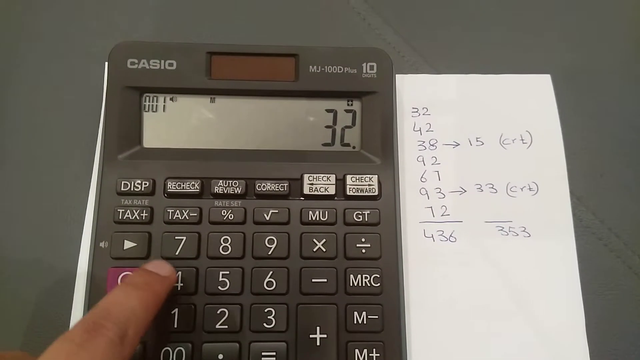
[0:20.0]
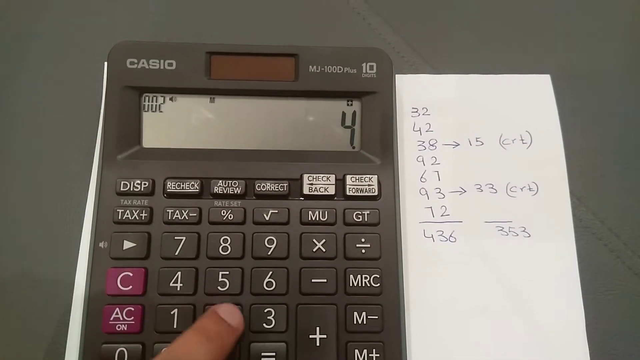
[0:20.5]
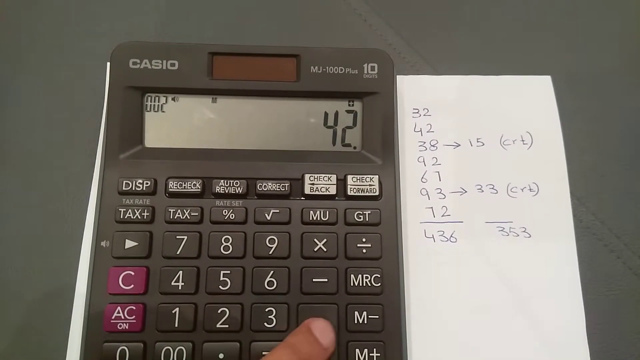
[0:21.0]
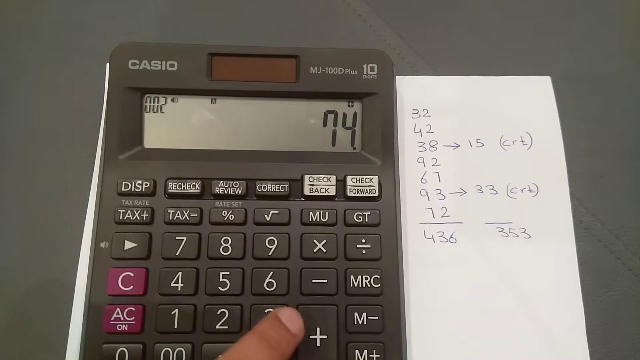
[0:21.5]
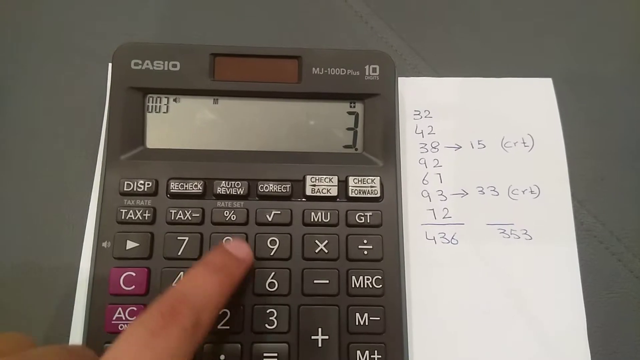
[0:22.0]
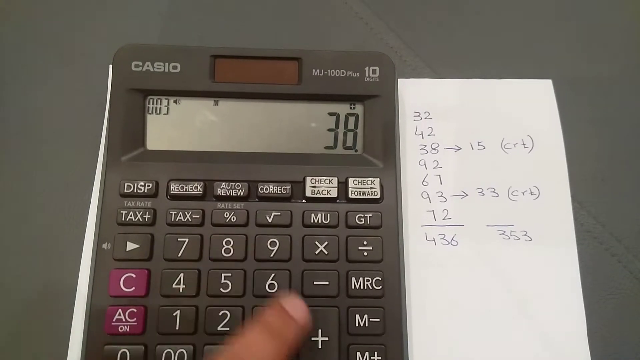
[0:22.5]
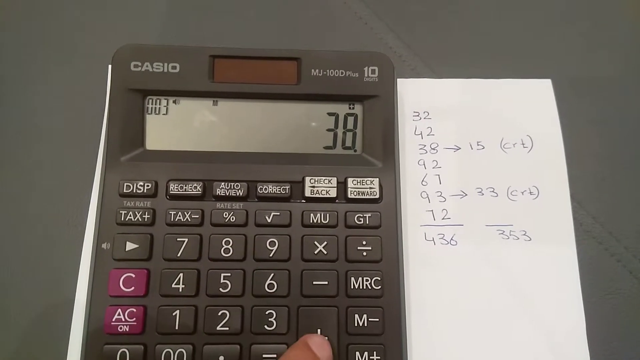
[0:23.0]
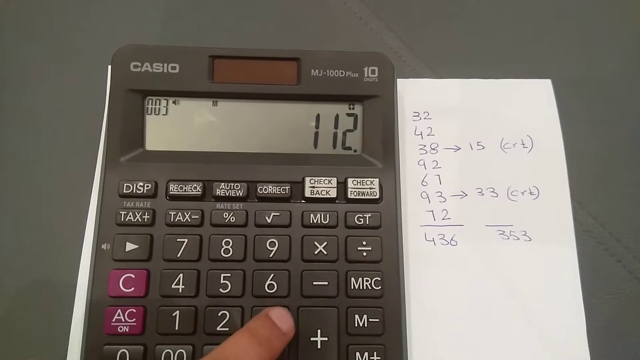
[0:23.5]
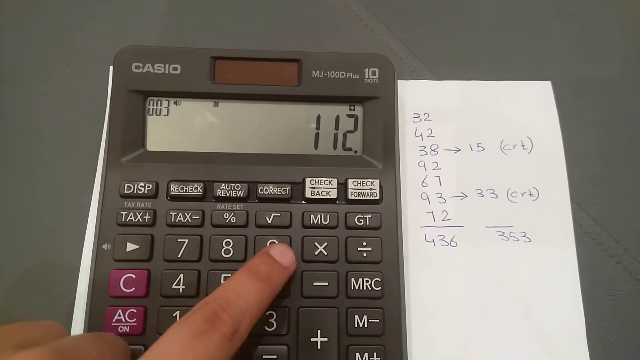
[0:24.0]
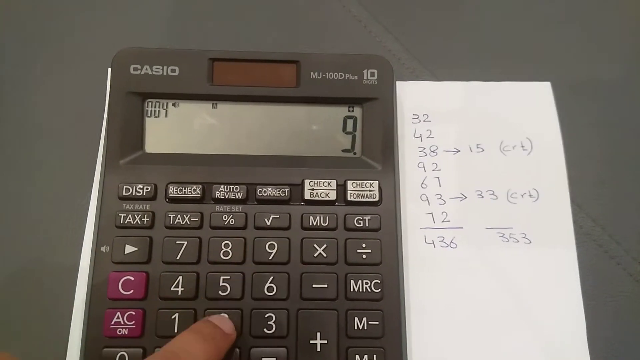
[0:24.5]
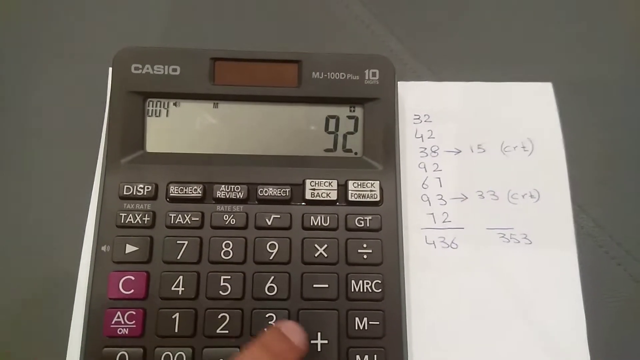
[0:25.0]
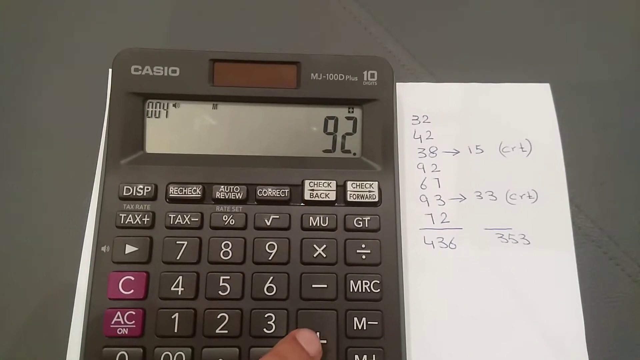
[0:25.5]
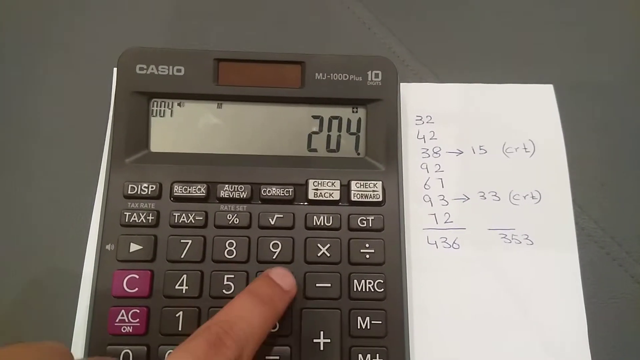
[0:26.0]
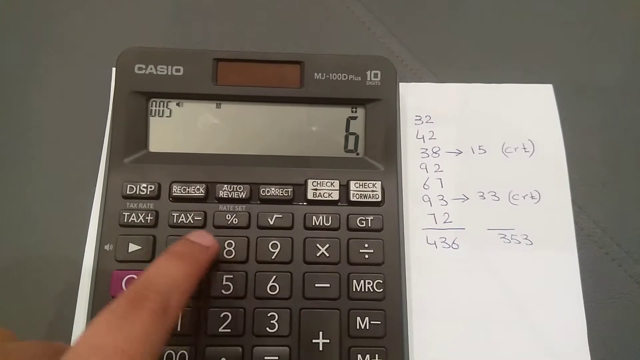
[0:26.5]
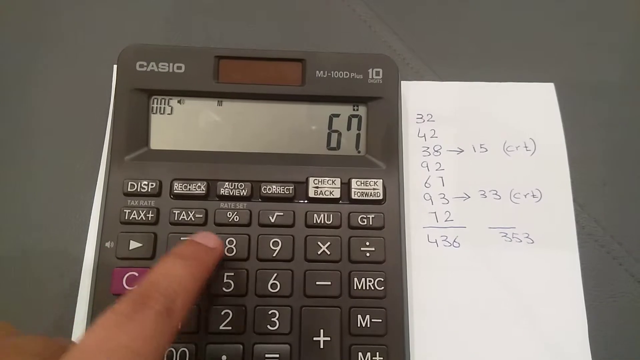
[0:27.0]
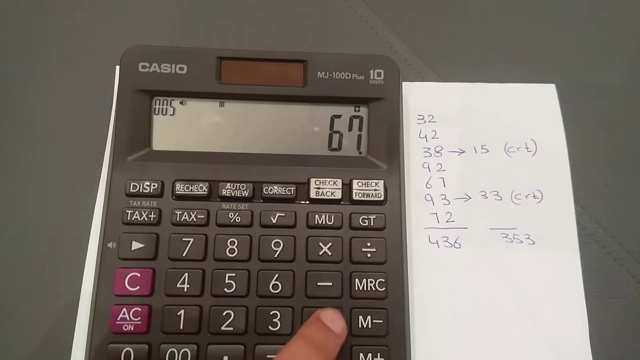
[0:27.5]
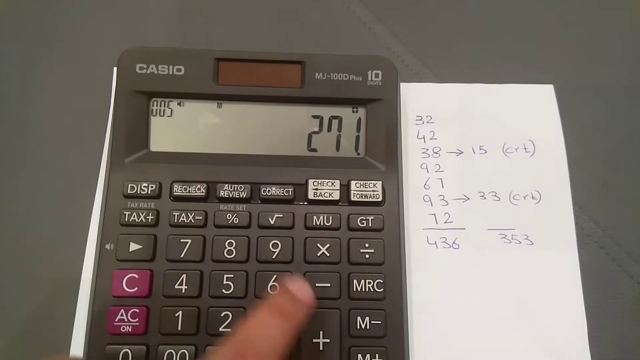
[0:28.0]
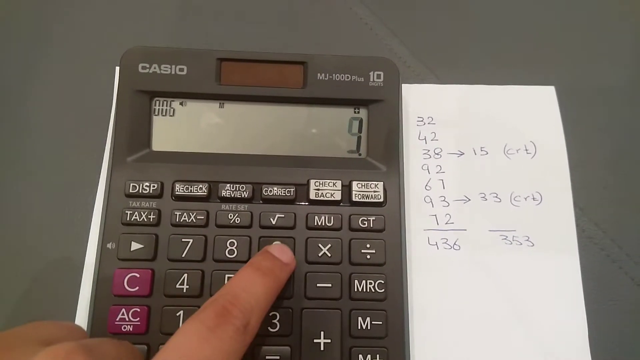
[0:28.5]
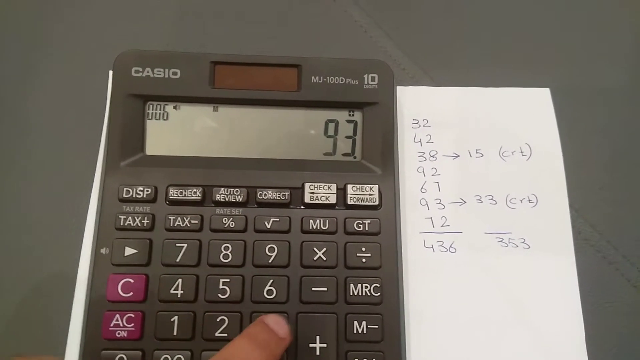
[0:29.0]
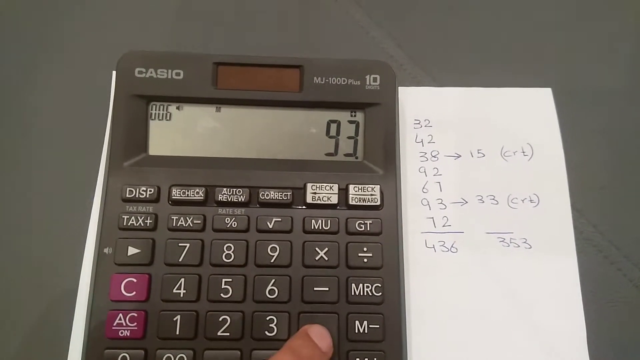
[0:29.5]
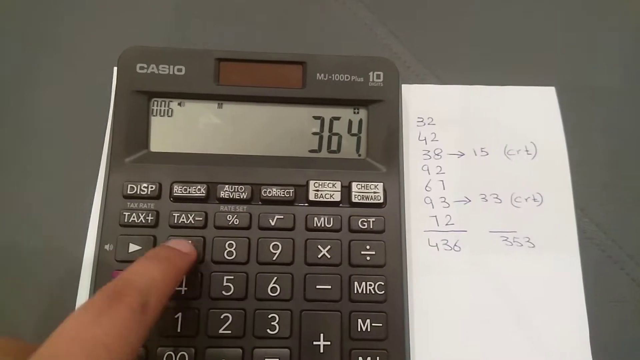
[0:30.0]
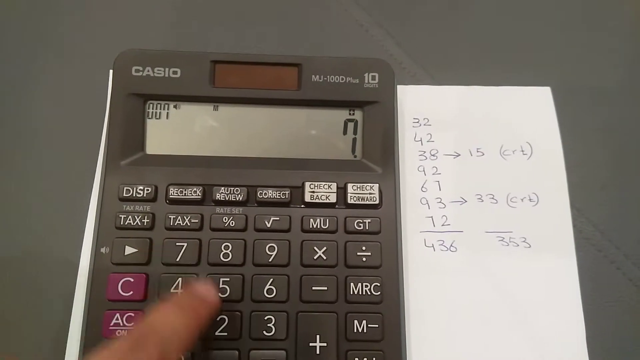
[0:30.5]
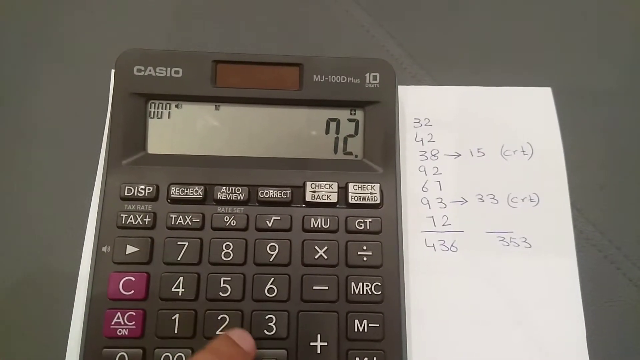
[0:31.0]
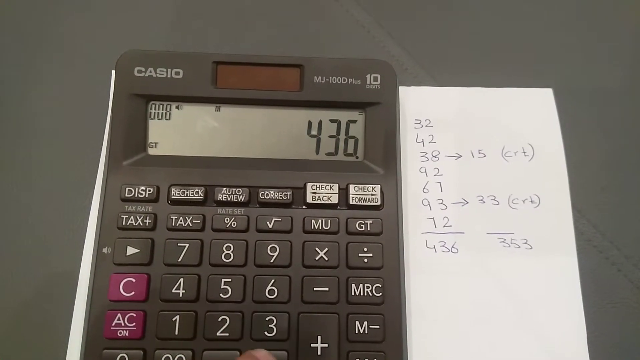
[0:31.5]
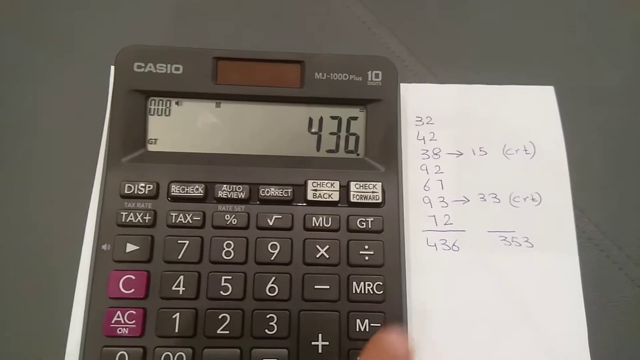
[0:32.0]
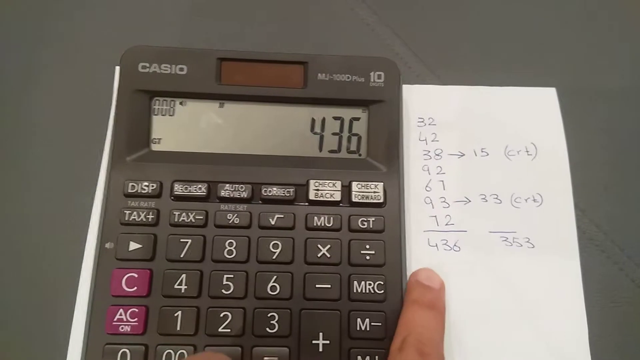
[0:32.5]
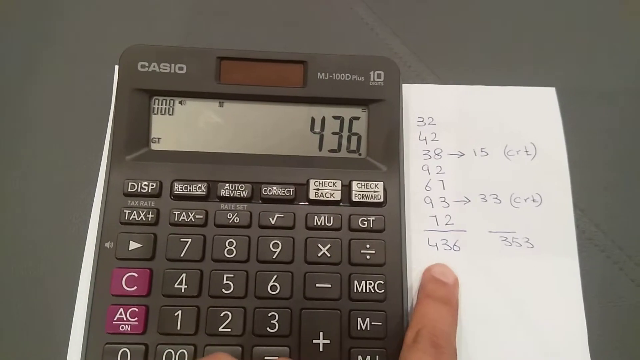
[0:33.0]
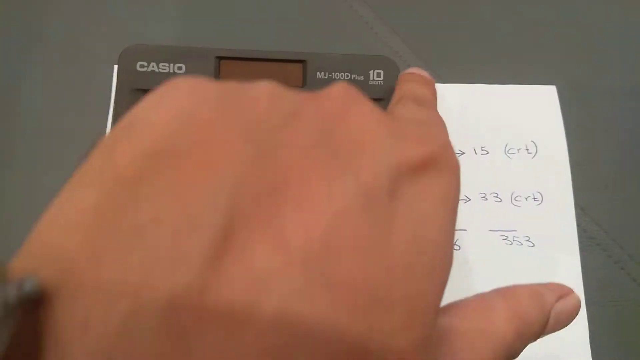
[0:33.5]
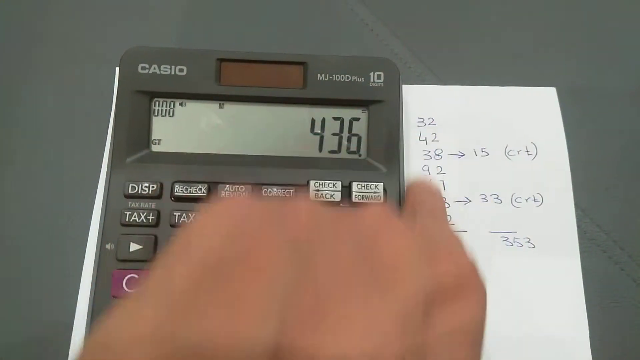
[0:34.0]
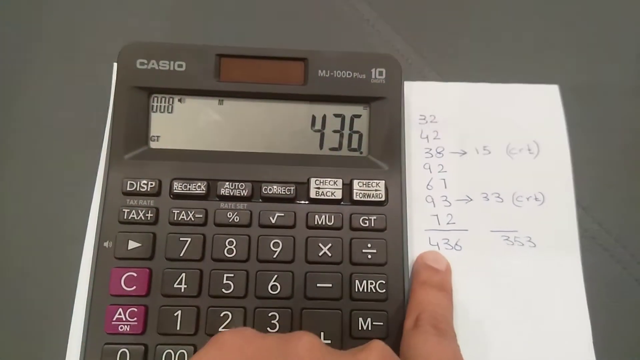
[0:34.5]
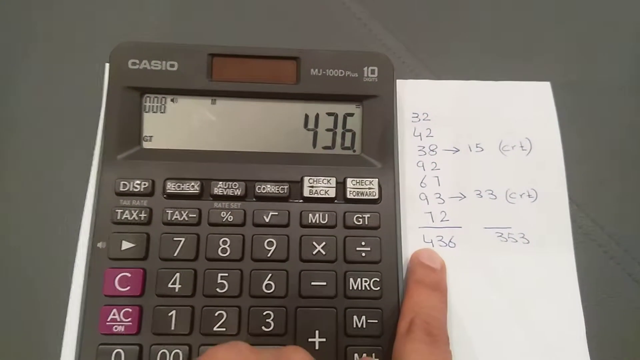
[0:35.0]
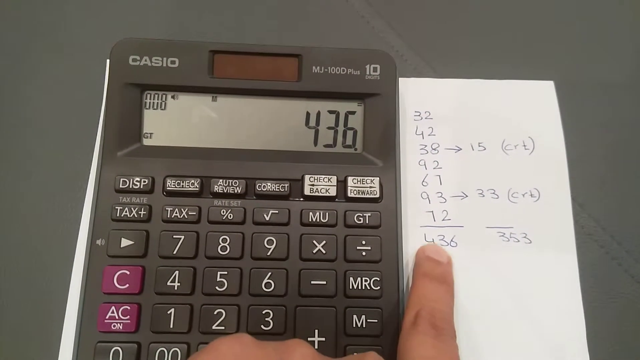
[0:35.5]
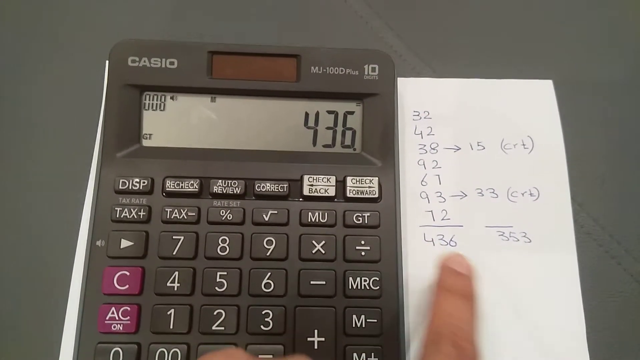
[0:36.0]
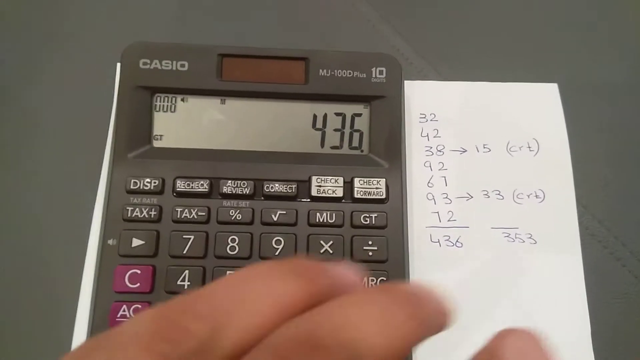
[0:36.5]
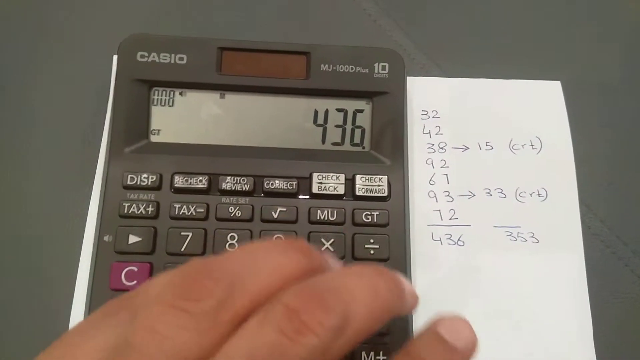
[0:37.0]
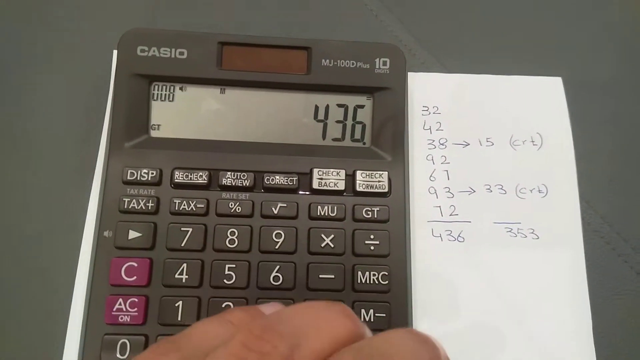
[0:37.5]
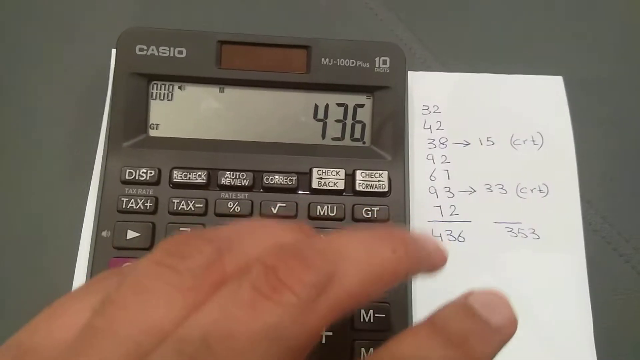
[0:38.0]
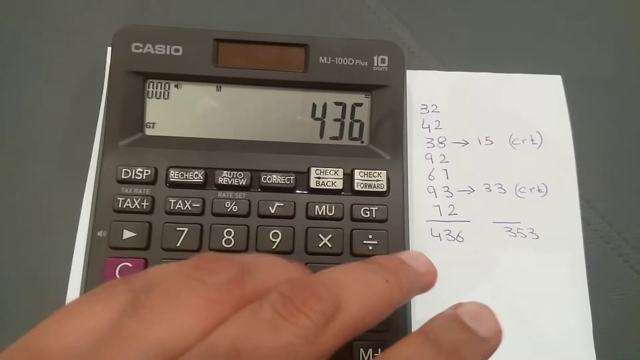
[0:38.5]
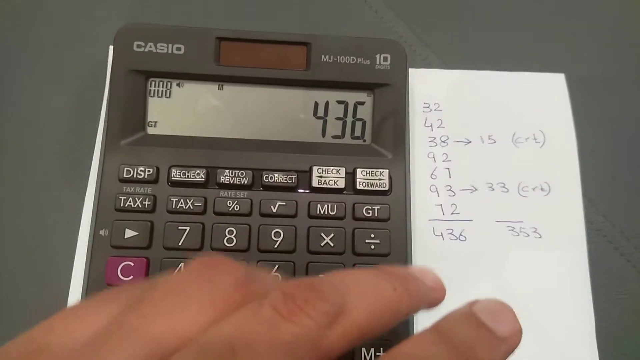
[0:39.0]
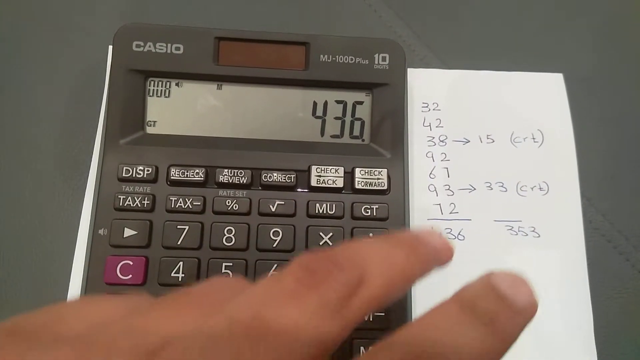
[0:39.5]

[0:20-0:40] The number 32 is typed in, and at the bottom left corner of the digital display screen the number 001 is visible, showing the total sets of numbers entered into the device. Next, 42 is entered, then the plus sign and the equal sign are pressed, and the display shows 112. The next input is plus 92, and the total shows 204. Then plus 67 gives 271, plus 93 gives 364, and plus 72 gives 436, the total of the list of numbers. The person puts their index finger at the top of the list on the paper and runs it from the top number all the way down to the bottom. In the top left corner of the display, a total of eight sets of numbers is shown as typed in.